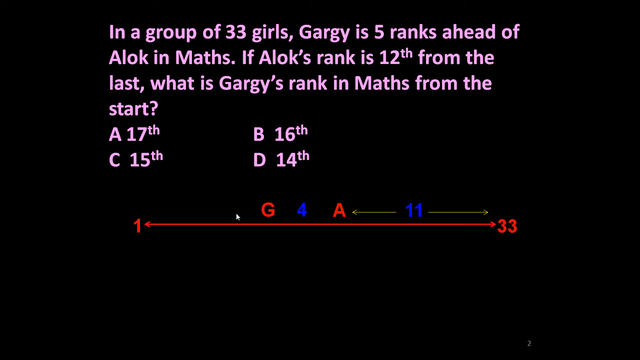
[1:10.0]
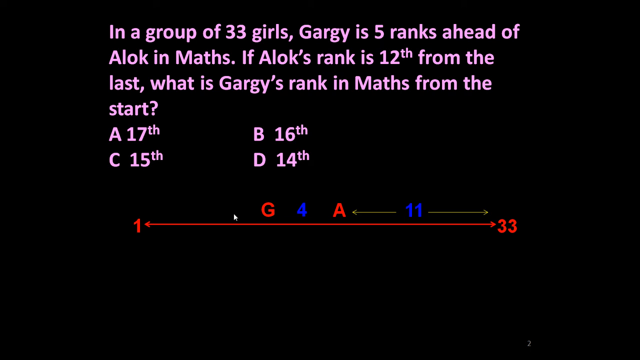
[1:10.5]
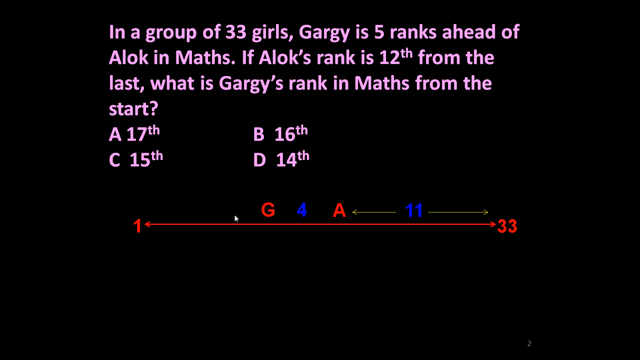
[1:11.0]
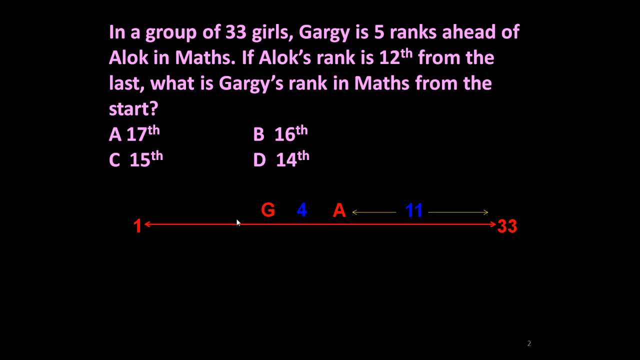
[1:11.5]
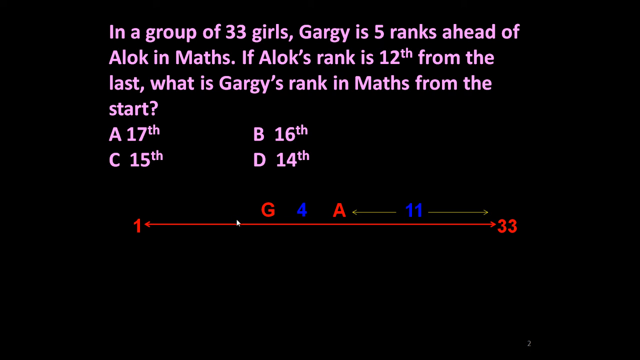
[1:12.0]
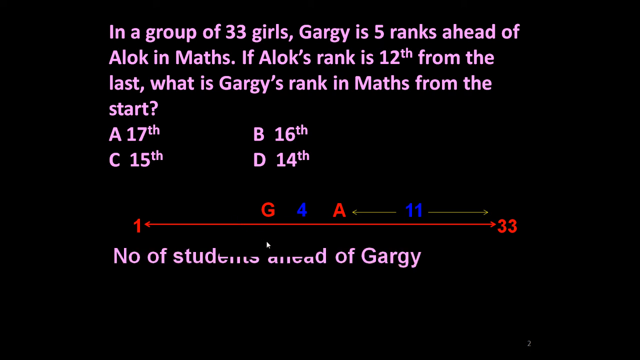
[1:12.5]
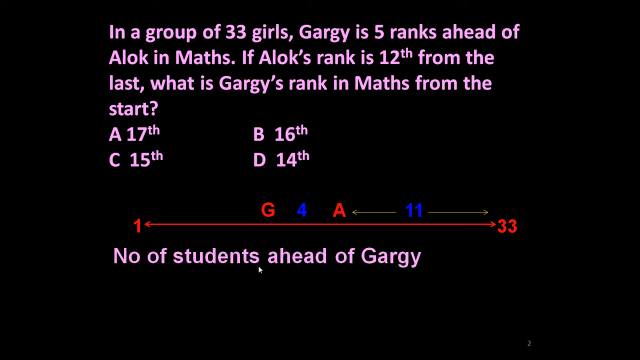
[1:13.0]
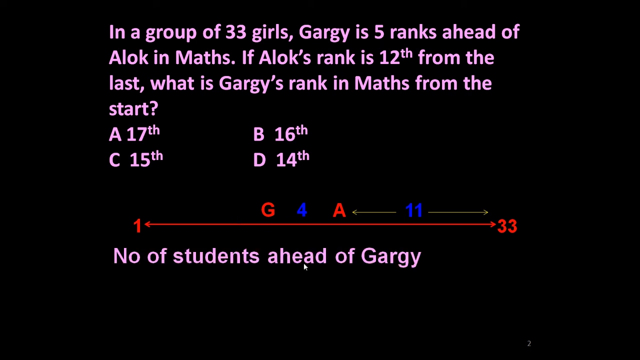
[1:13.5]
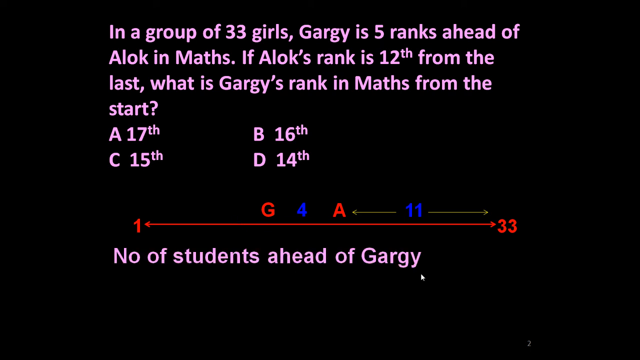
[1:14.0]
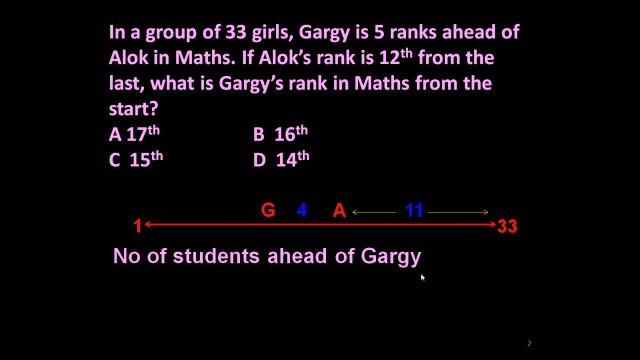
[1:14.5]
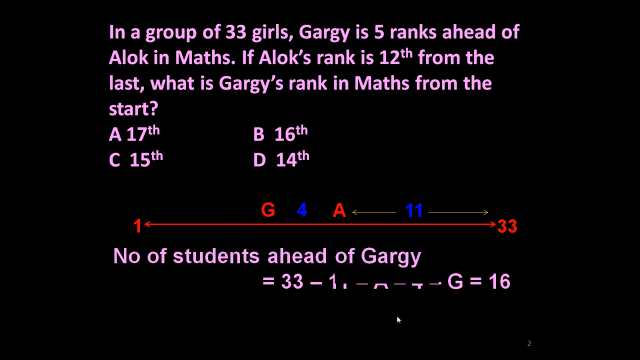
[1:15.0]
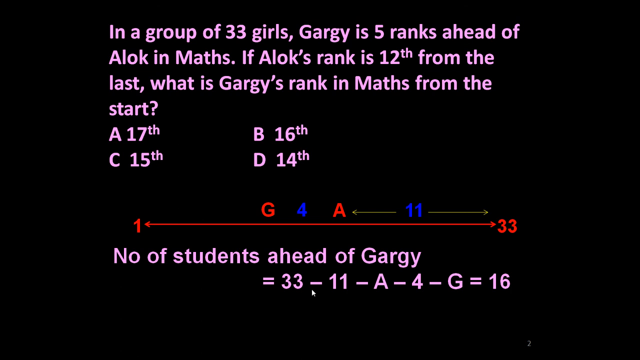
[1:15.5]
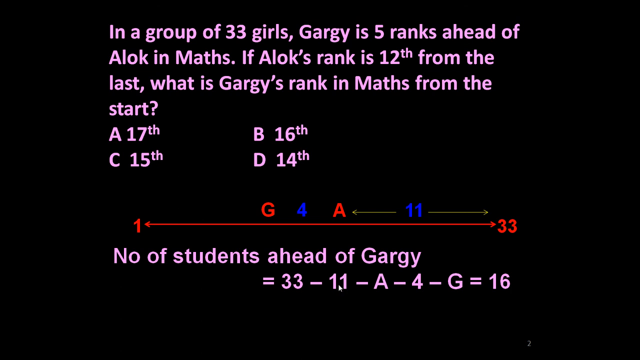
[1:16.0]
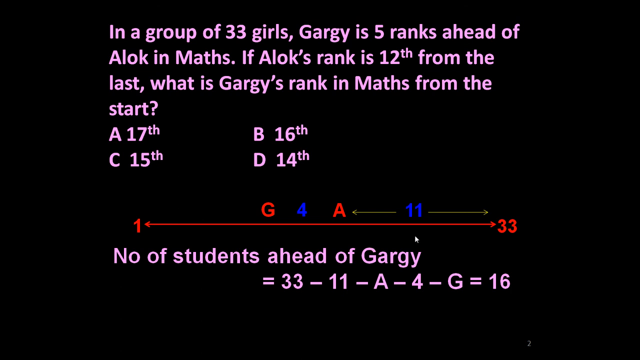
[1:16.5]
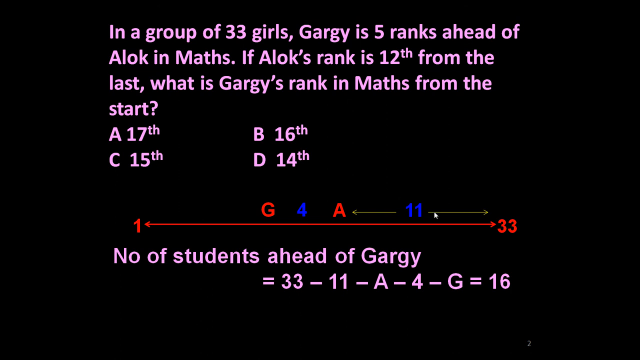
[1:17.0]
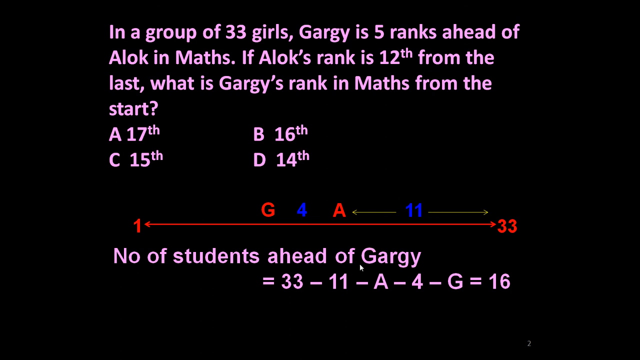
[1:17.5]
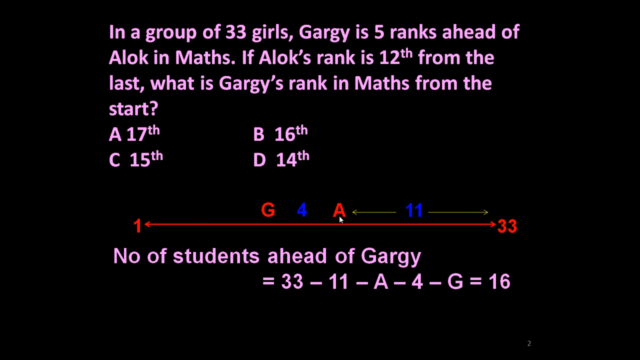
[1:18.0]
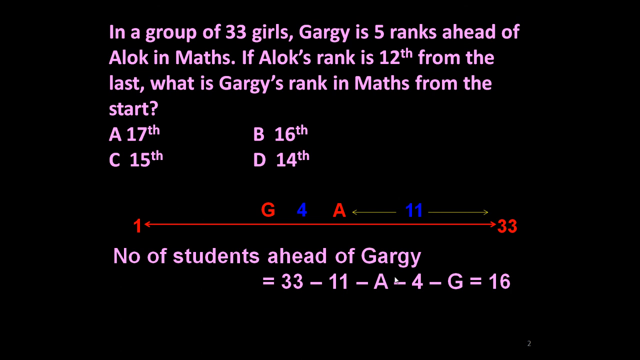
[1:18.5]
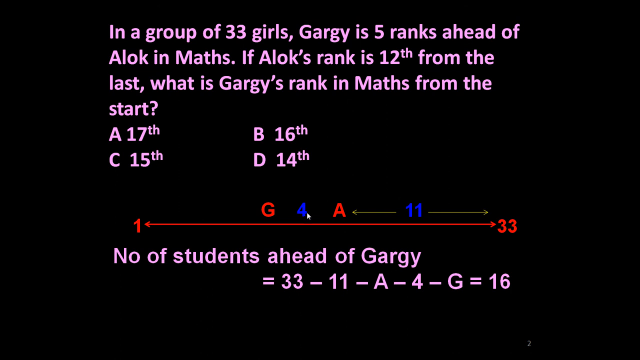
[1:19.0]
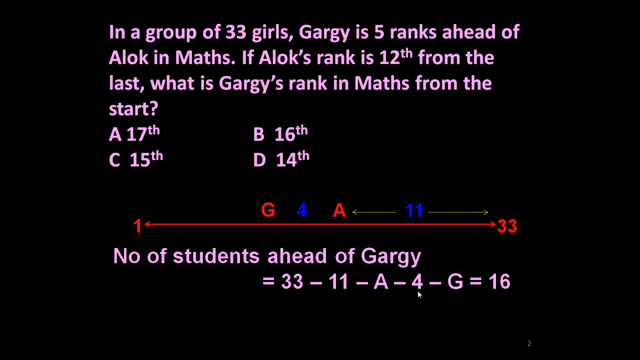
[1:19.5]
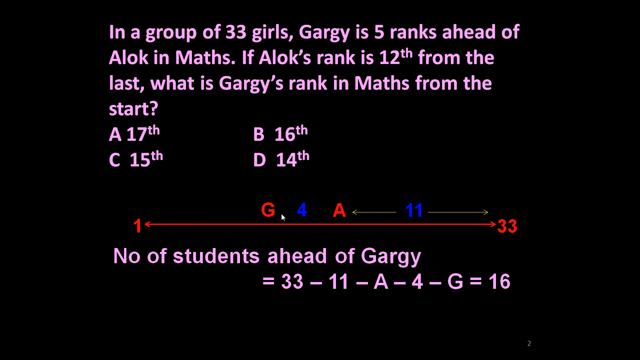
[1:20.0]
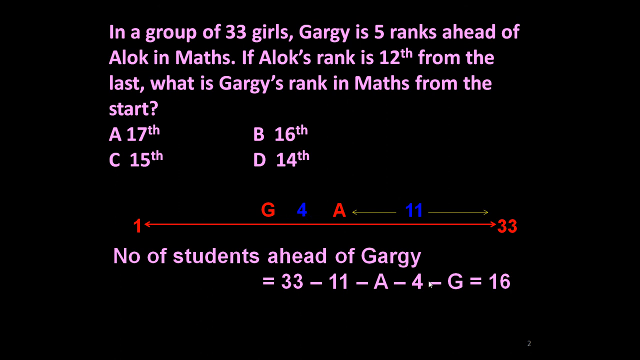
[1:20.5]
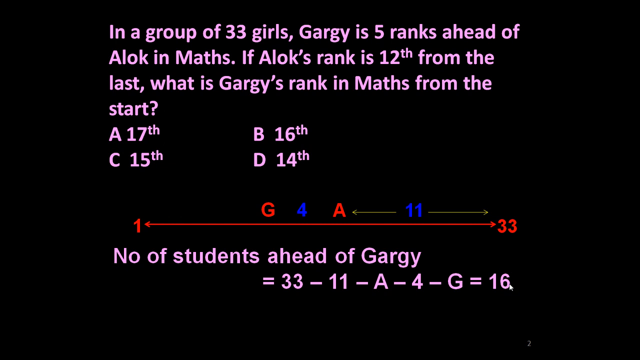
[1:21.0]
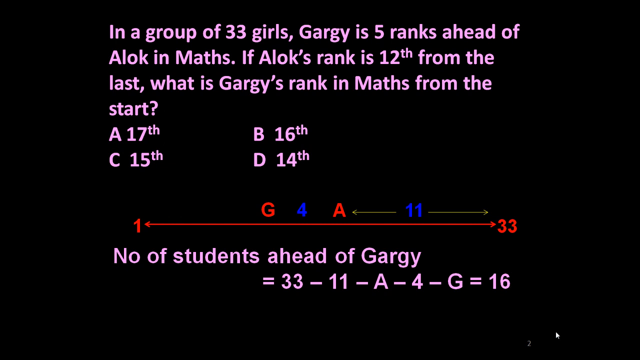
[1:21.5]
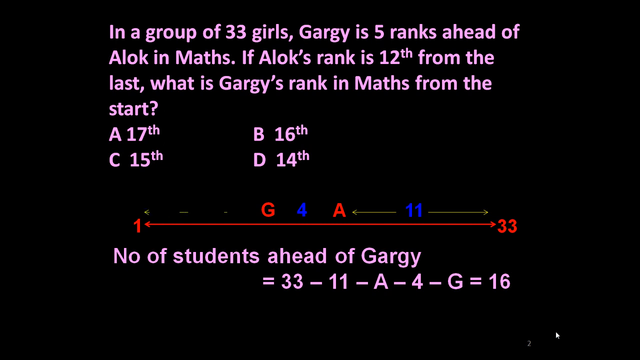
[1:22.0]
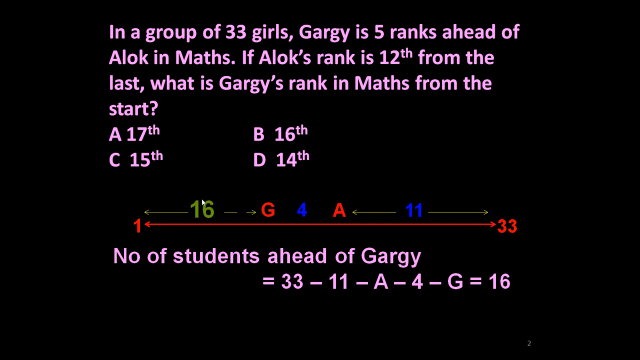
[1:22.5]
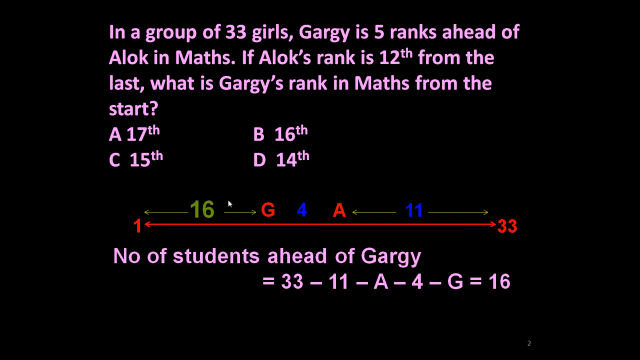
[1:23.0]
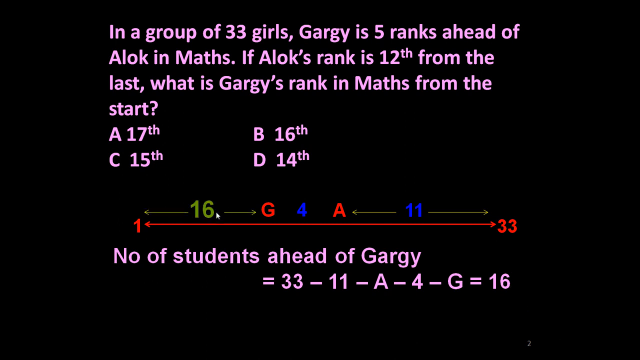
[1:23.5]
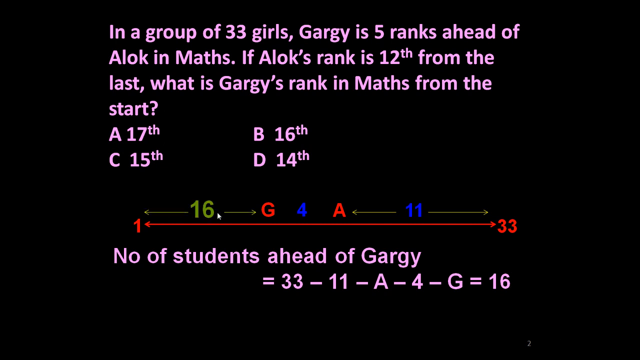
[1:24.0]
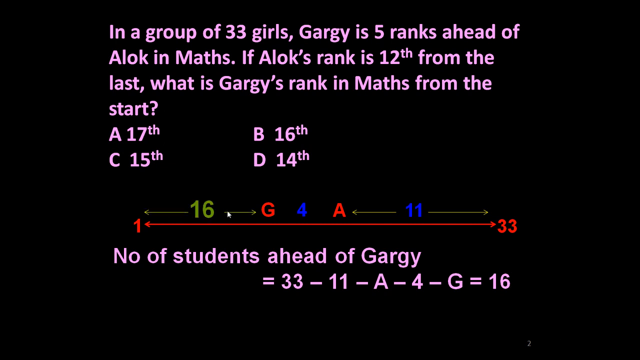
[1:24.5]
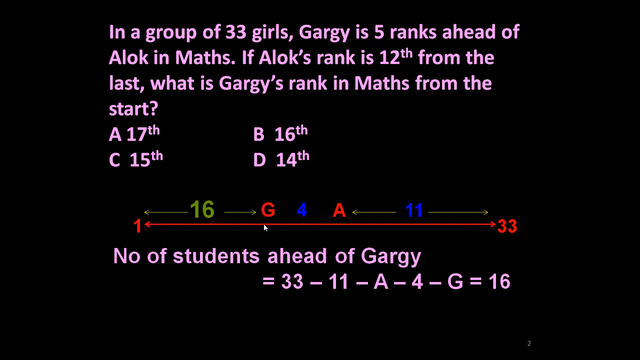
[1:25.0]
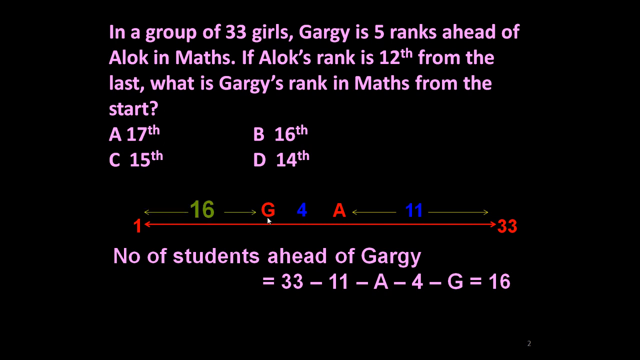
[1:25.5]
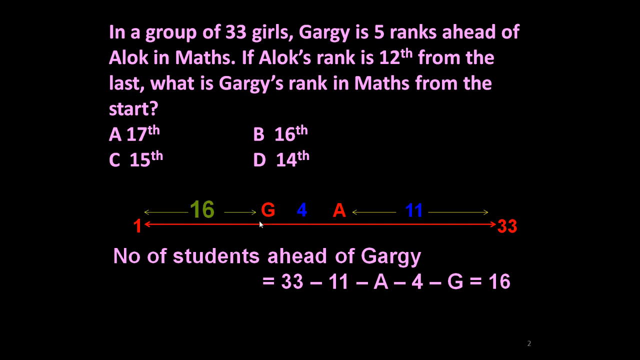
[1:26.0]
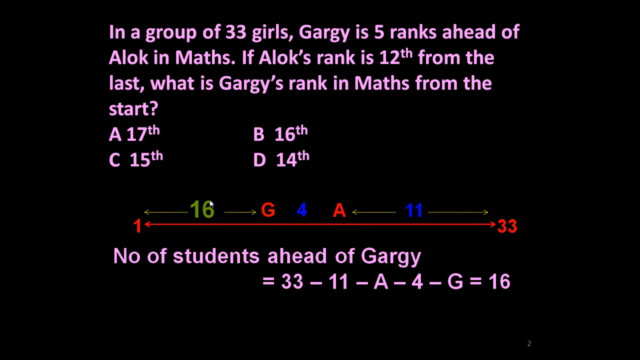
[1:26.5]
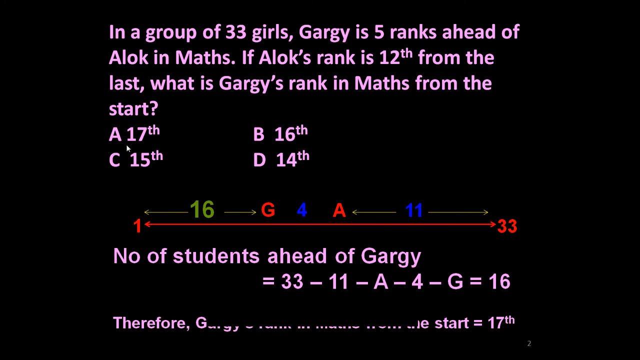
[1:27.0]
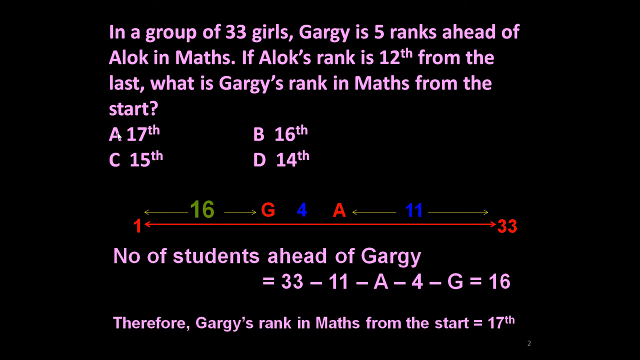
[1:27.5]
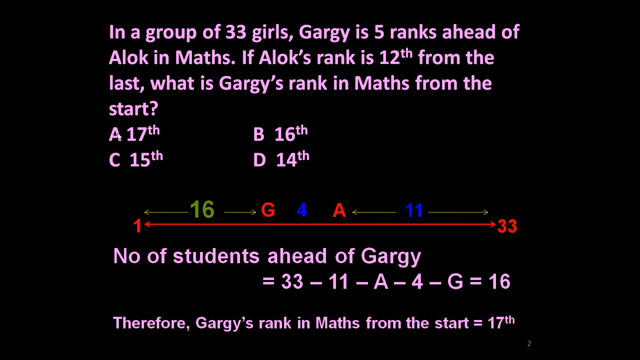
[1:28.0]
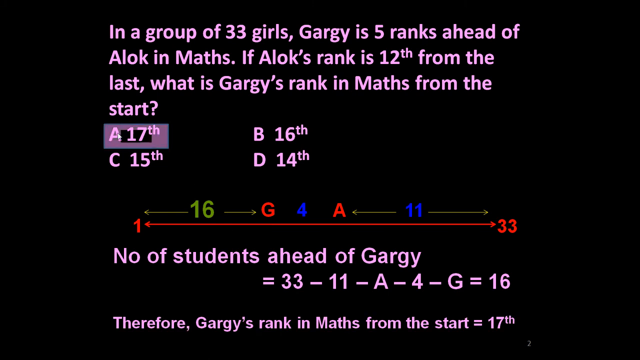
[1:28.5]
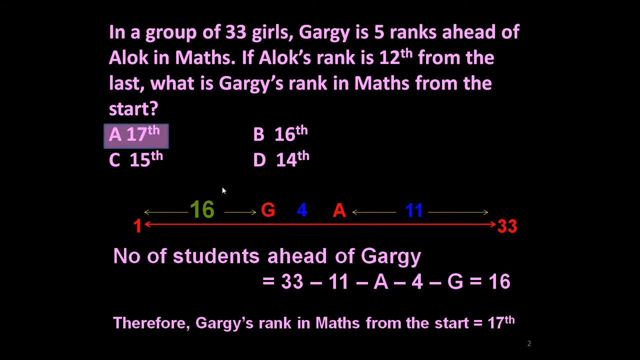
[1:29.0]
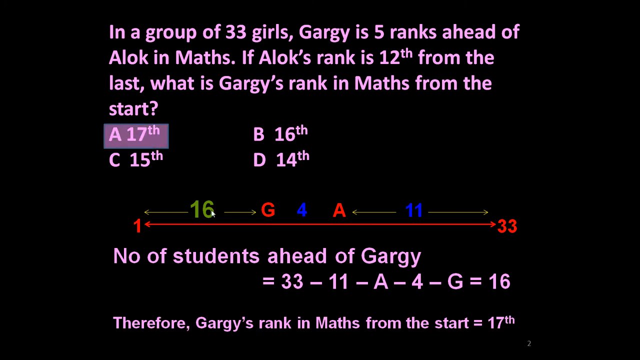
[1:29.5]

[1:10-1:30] The question remains on screen with options A 17, B 16, C 15 and D 14. On the line chart, a distance of 11 is shown from A, and the distance from G to A is 4, representing Gargi and Alok. A calculation then appears showing the number of students ahead of Gargi as 33 minus 11 minus A minus 4 minus another term, equalling 16. The mouse moves, and the value 16 is placed on the left side of the line chart, from 1 to G, which is Gargi. A point on the right side is highlighted, showing that Gargi's rank from the start is 17th.